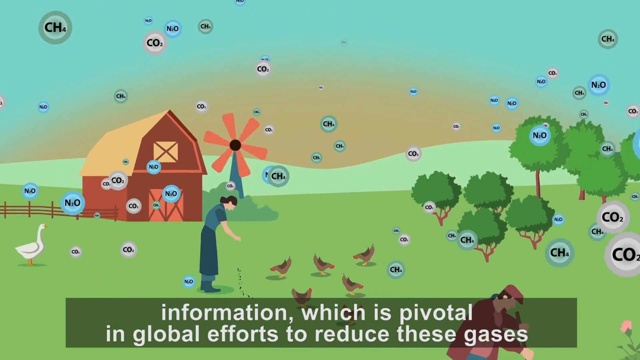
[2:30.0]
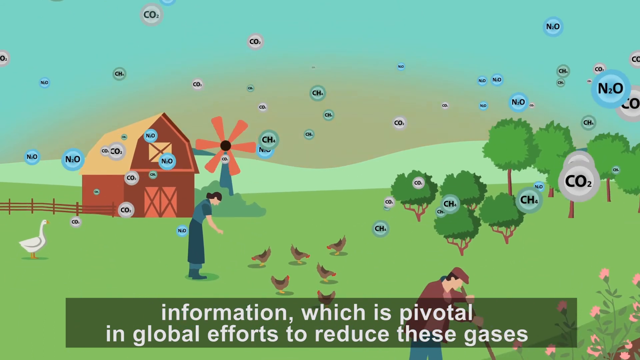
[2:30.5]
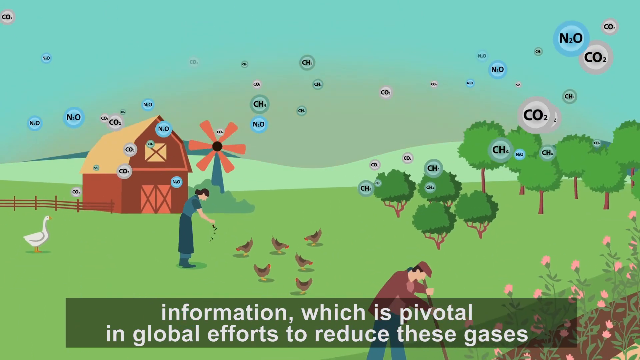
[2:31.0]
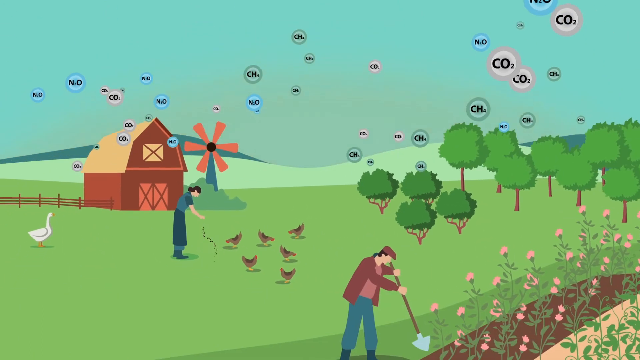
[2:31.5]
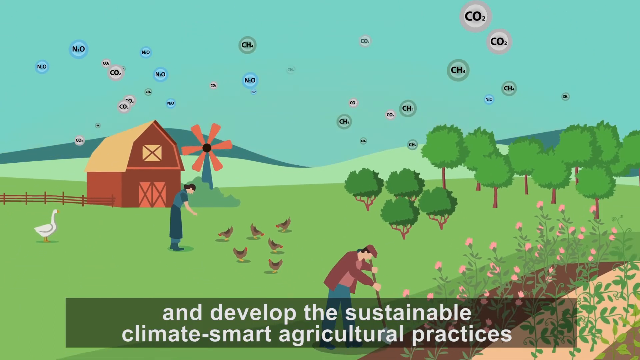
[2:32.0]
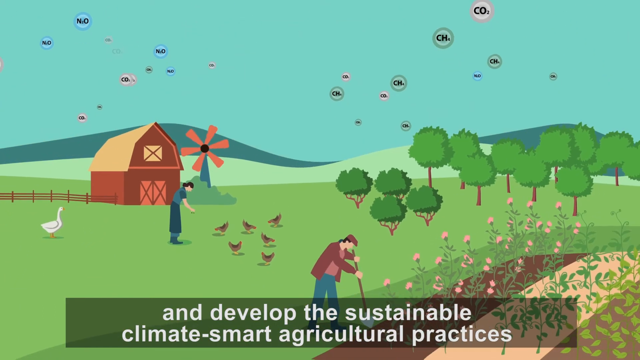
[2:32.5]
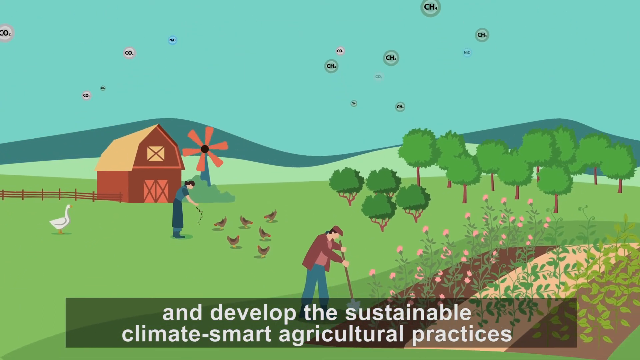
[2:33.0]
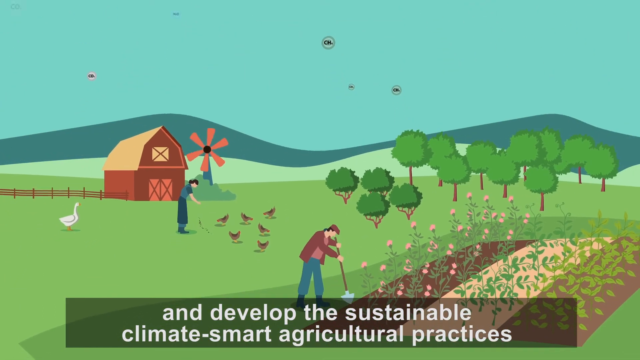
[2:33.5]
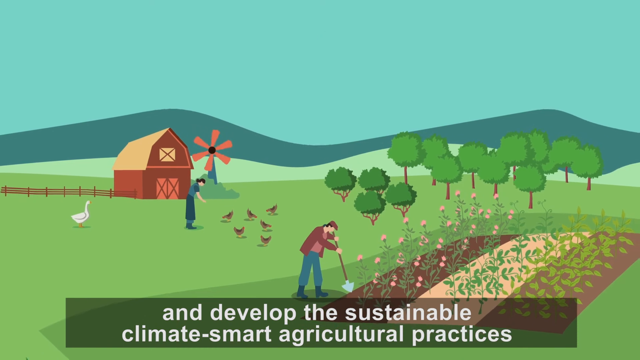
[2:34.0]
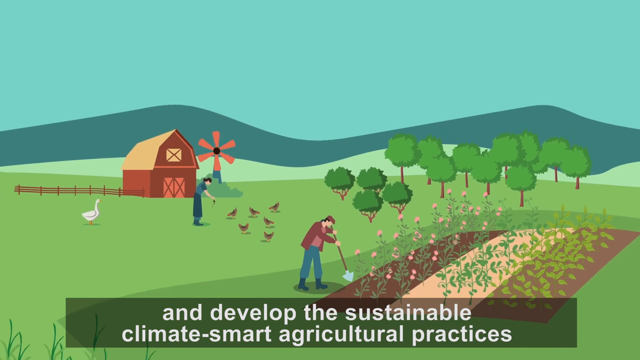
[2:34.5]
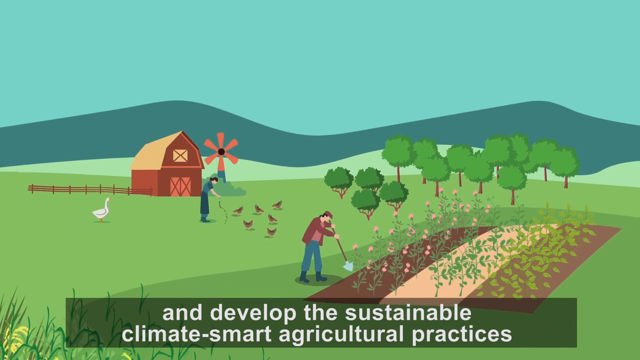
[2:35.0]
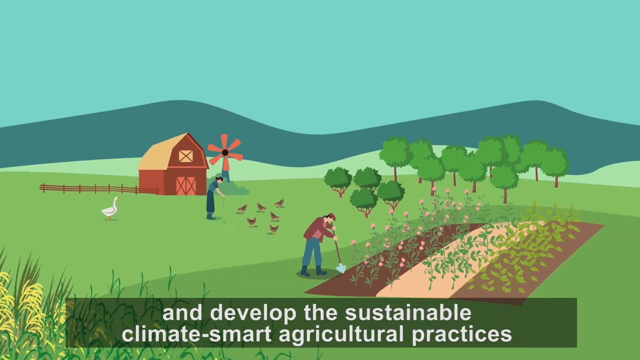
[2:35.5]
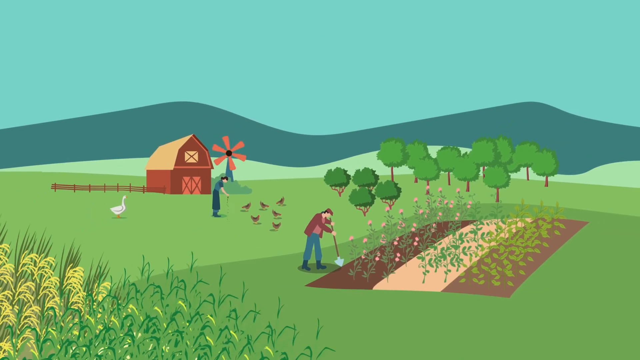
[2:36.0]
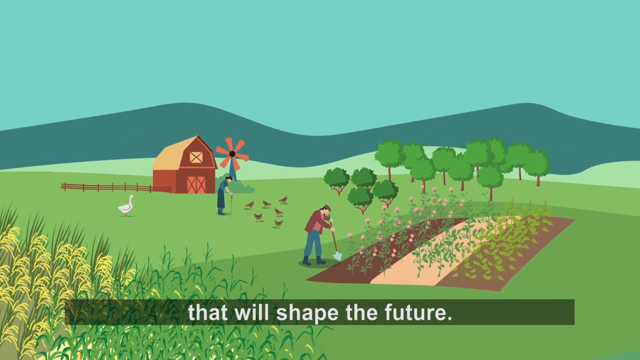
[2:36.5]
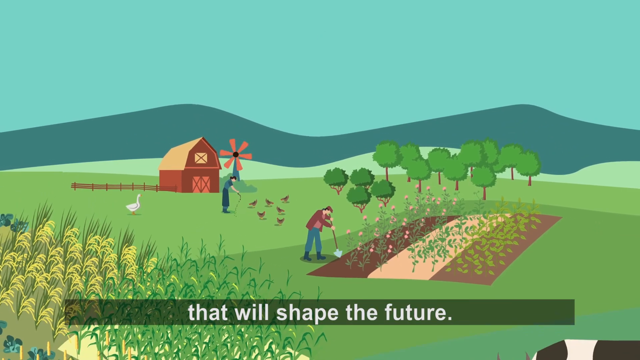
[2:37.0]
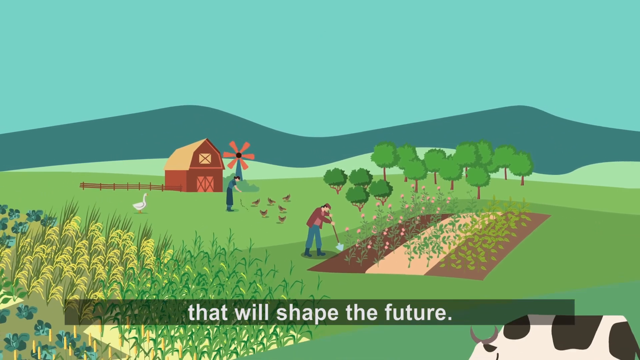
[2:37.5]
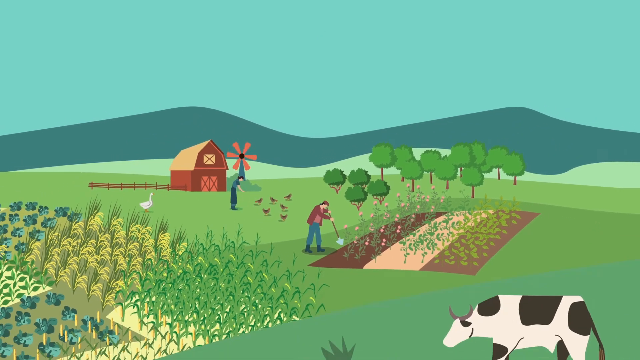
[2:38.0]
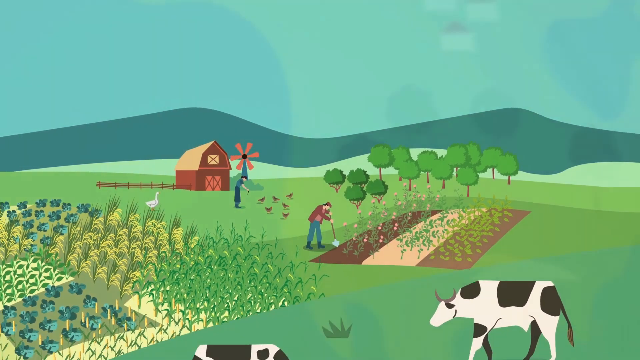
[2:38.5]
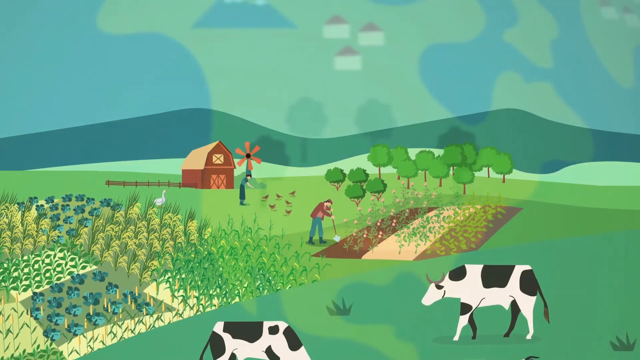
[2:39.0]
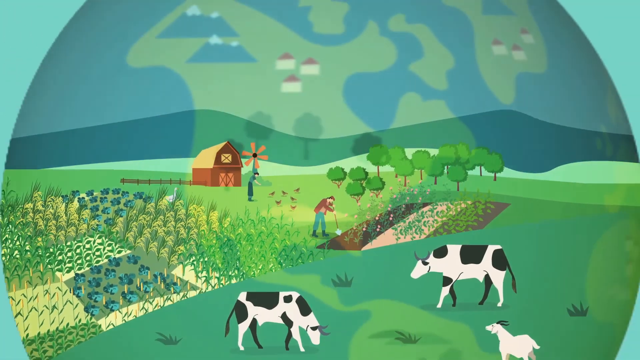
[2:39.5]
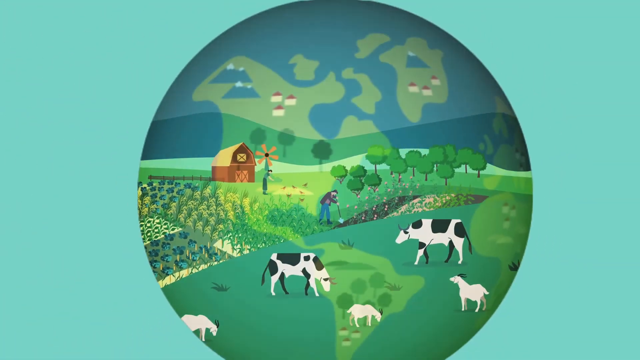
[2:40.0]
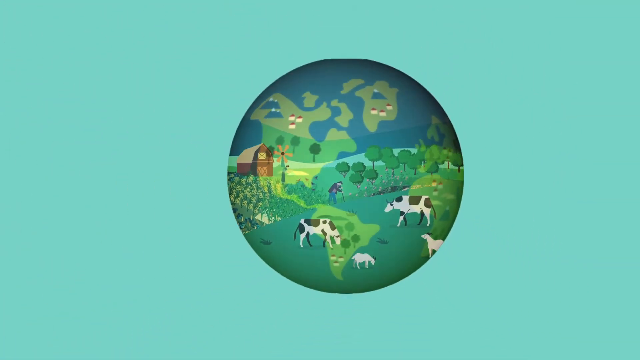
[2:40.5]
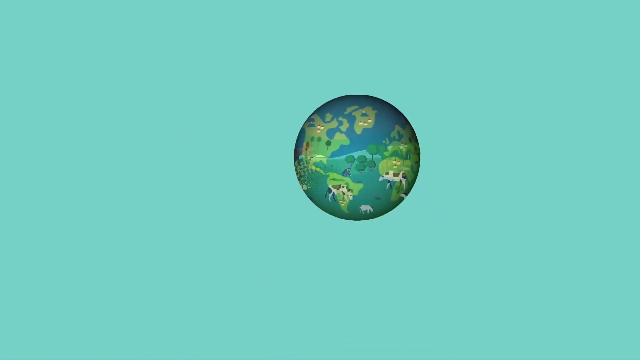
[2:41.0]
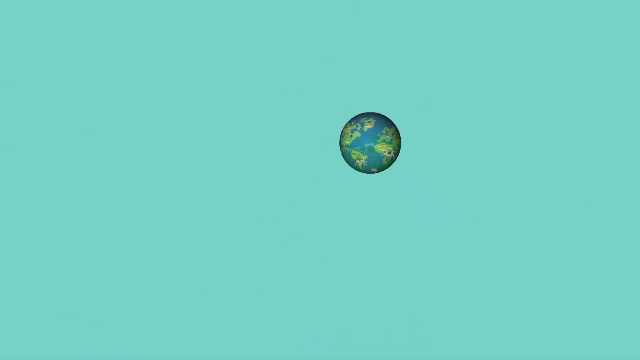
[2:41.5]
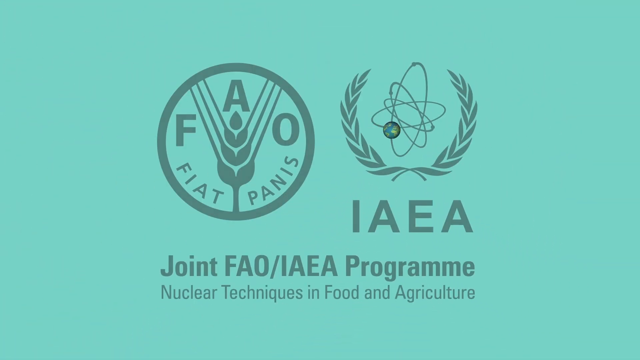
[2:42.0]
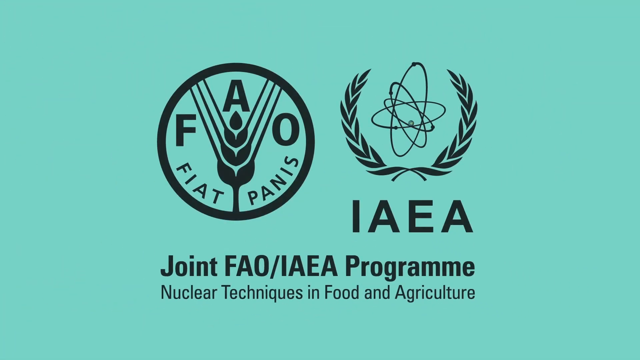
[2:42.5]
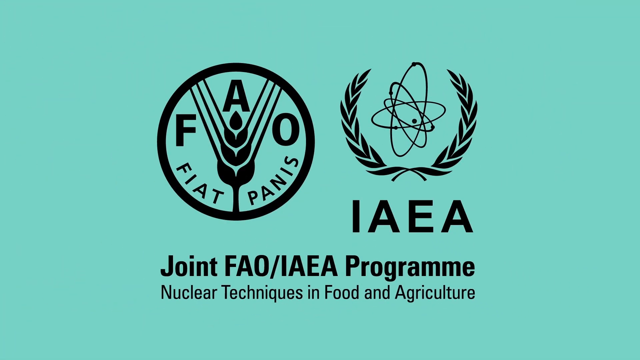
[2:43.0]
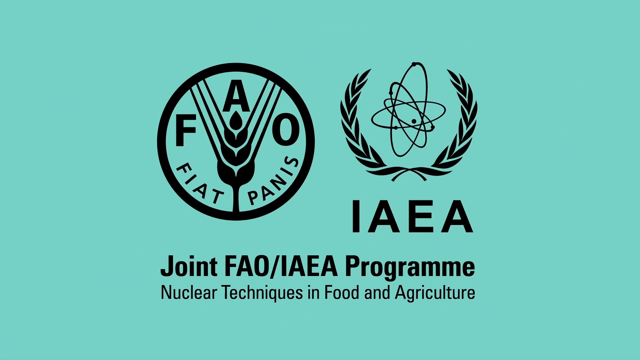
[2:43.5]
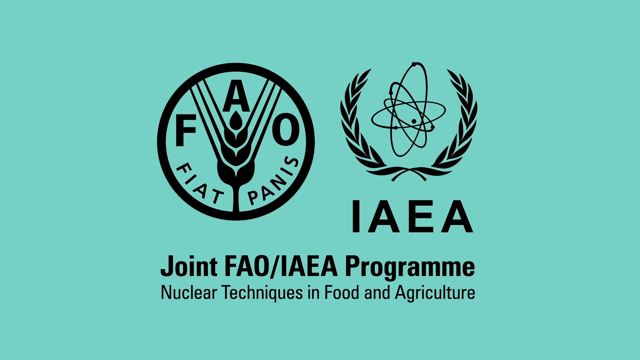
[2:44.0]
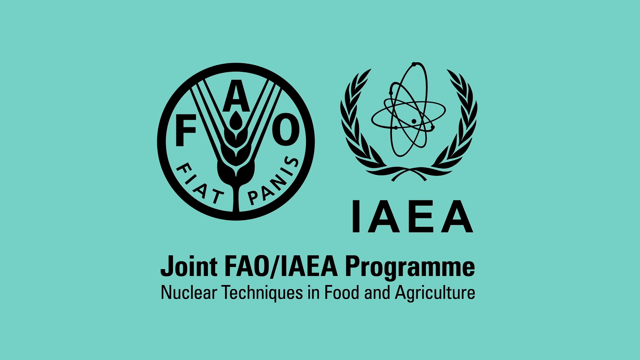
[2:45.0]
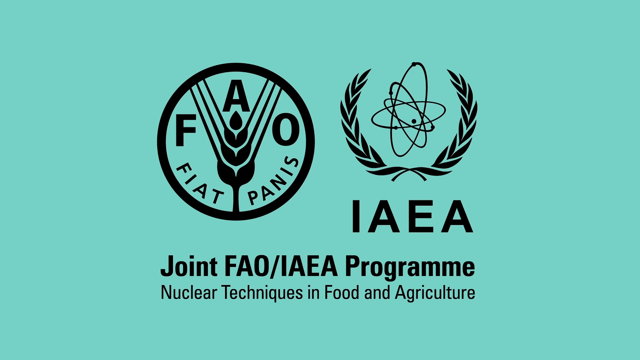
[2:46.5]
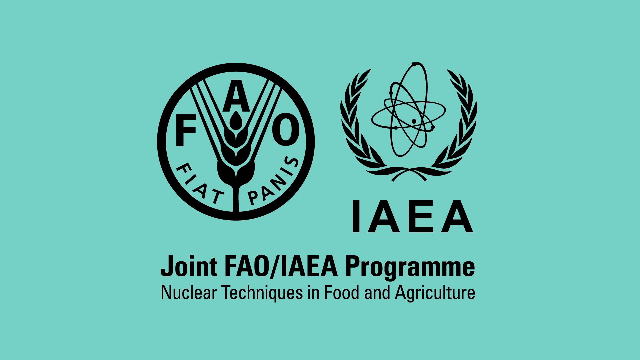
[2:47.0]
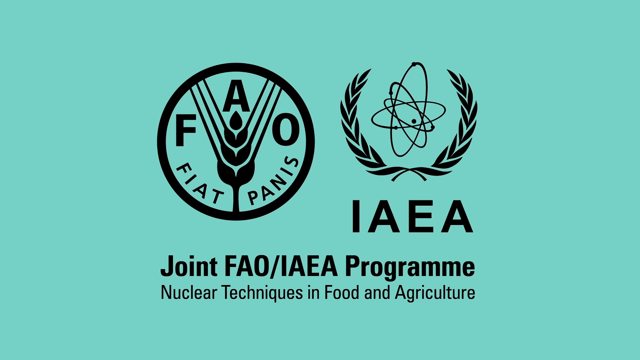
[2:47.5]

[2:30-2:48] A farm or barn is on the left side, with geese, chickens and trees on the right side. A woman, seen in right-side profile, is feeding what look like chickens, whose heads are down eating. Gases float in the air: greenish CH4, N2O, and CO2 in a gray circle. White text at the bottom reads "information, which is pivotal in the global efforts to reduce these gases" and continues about sustainable, climate smart agricultural practices "that will shape the future." Then a smaller globe appears in the background, in an almost sea-breeze colour. Logos appear, including "FAO", "PANIS" and "IAGA", along with "Nuclear Techniques in Food and Agriculture".